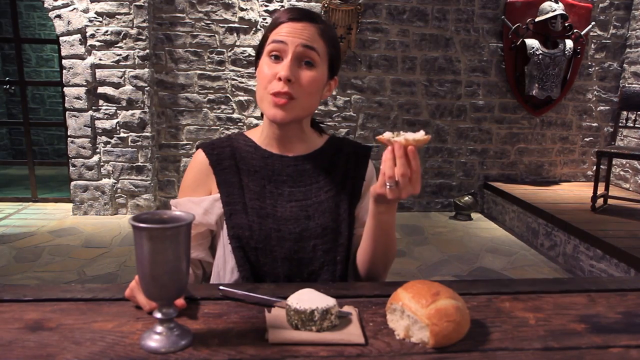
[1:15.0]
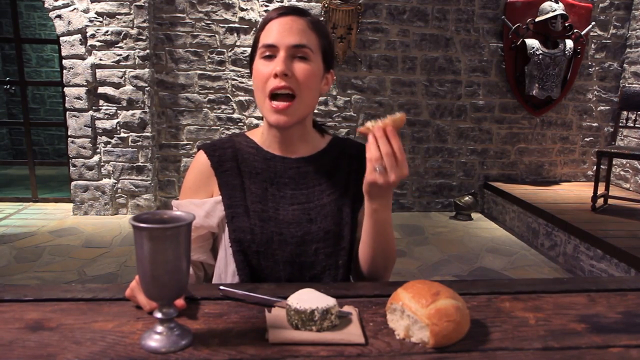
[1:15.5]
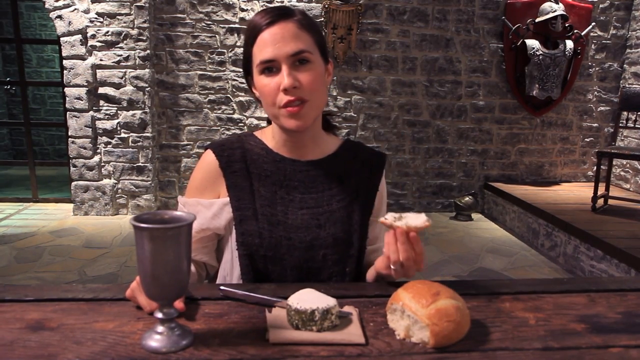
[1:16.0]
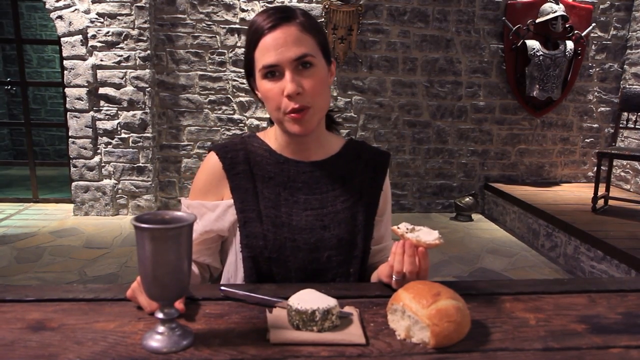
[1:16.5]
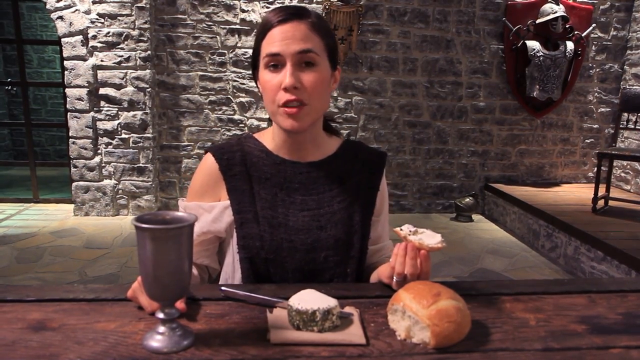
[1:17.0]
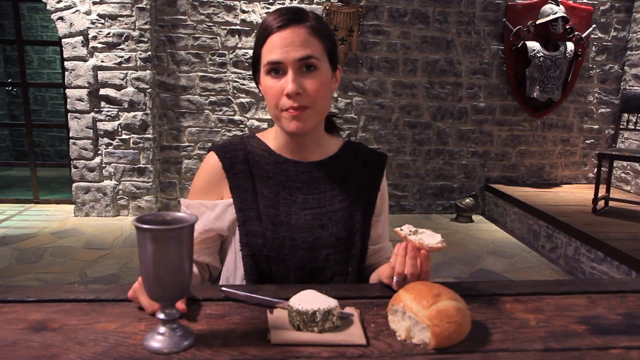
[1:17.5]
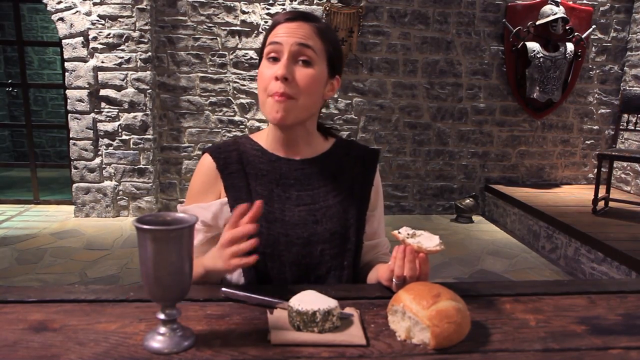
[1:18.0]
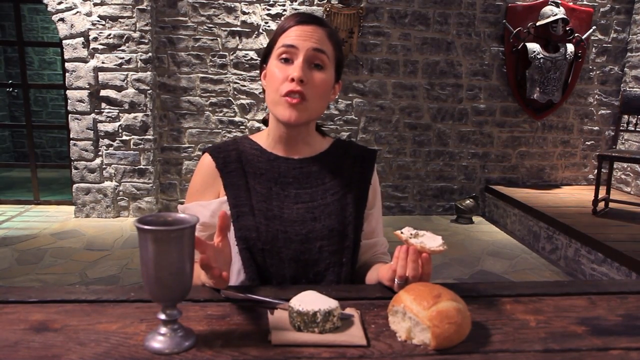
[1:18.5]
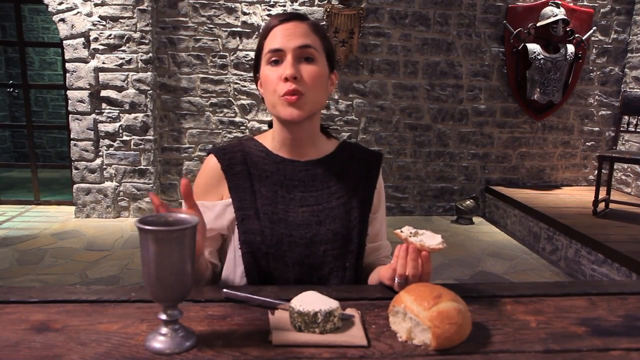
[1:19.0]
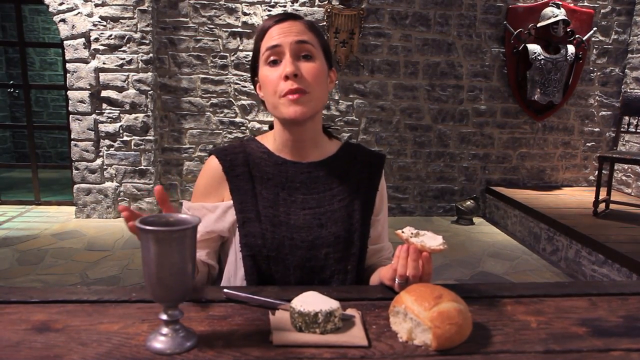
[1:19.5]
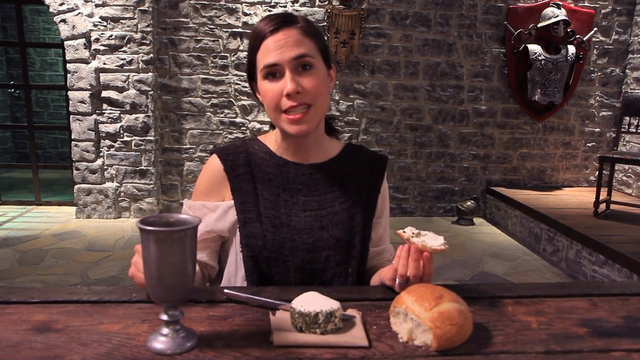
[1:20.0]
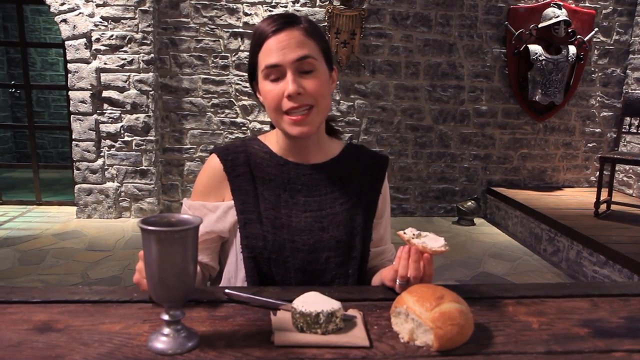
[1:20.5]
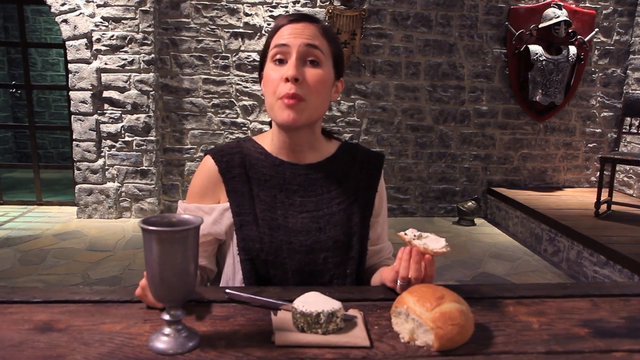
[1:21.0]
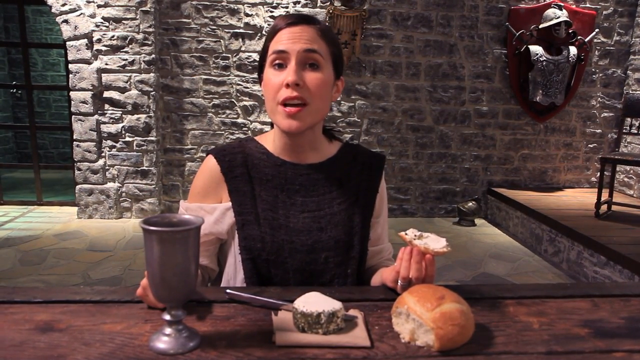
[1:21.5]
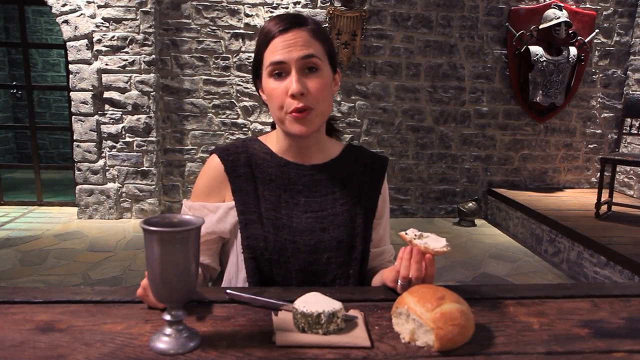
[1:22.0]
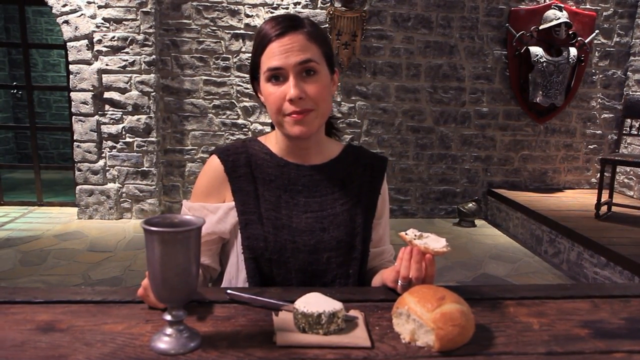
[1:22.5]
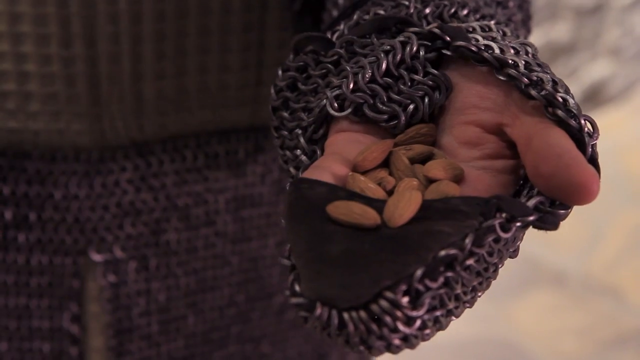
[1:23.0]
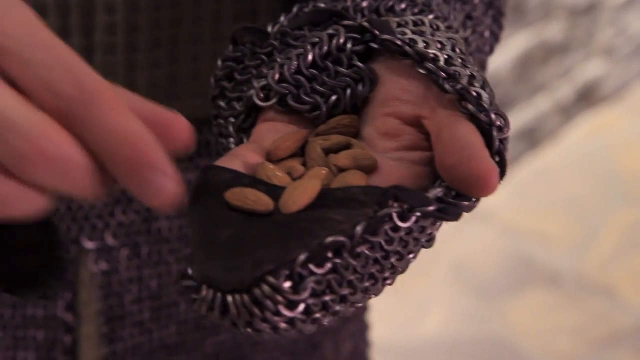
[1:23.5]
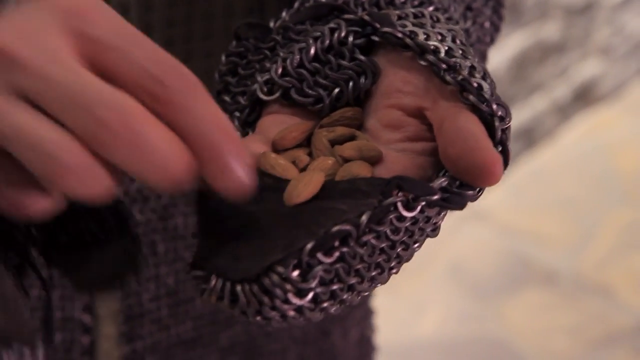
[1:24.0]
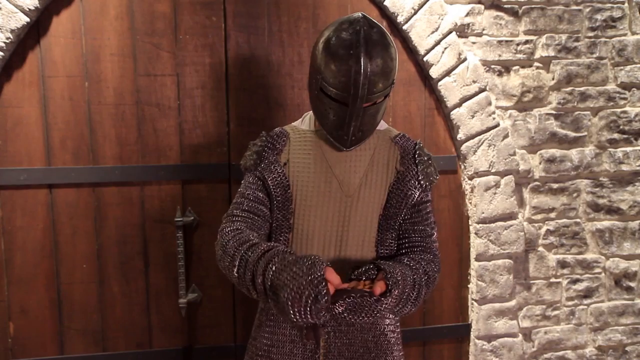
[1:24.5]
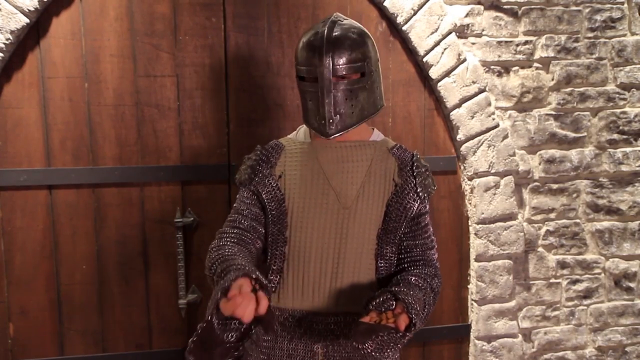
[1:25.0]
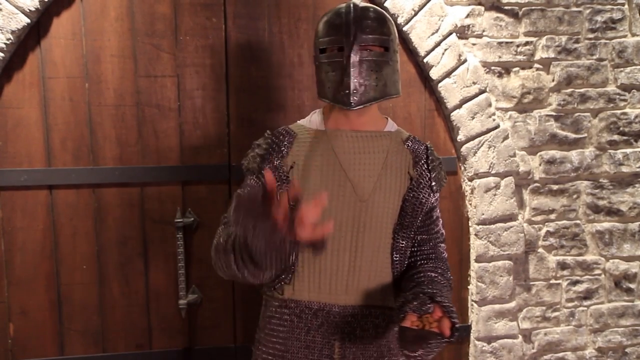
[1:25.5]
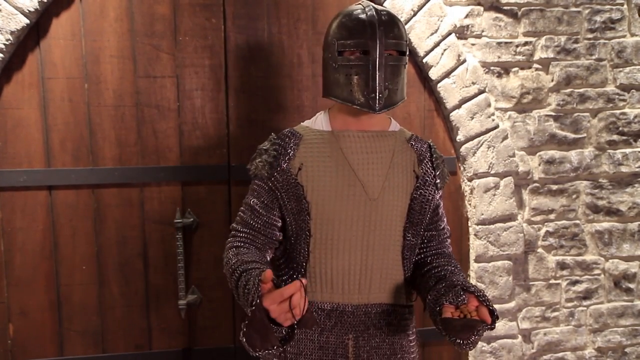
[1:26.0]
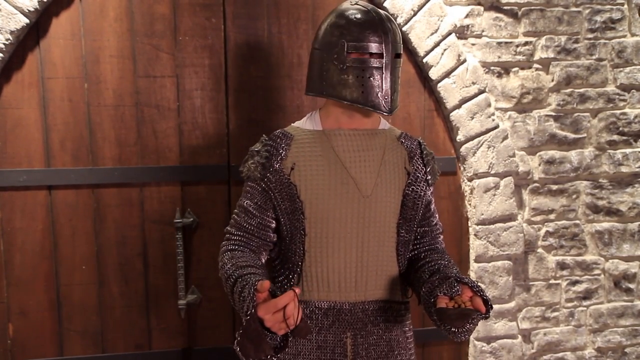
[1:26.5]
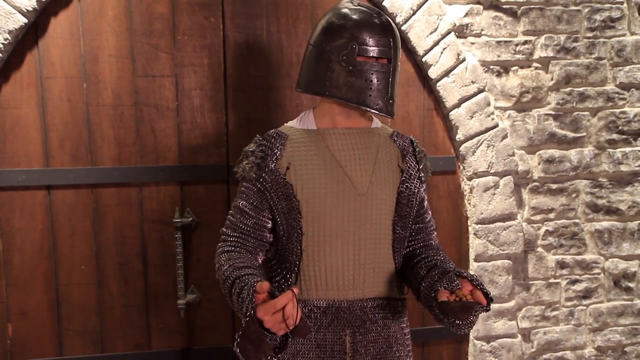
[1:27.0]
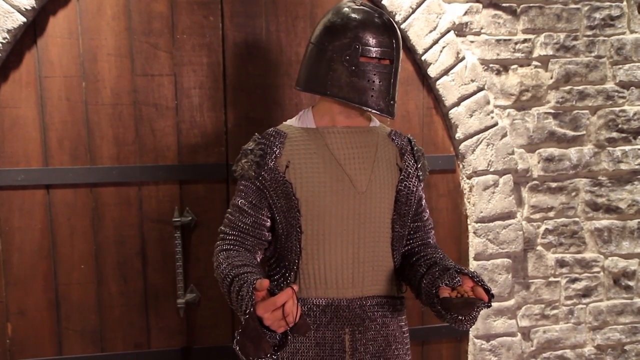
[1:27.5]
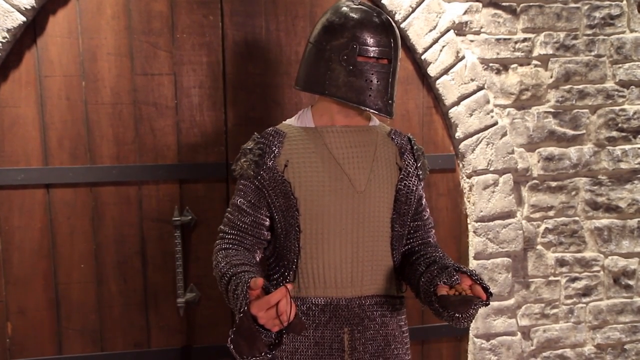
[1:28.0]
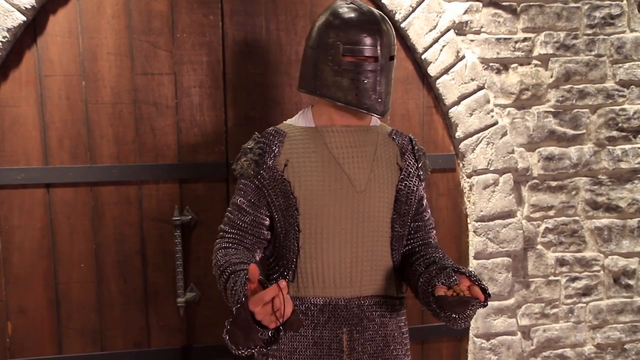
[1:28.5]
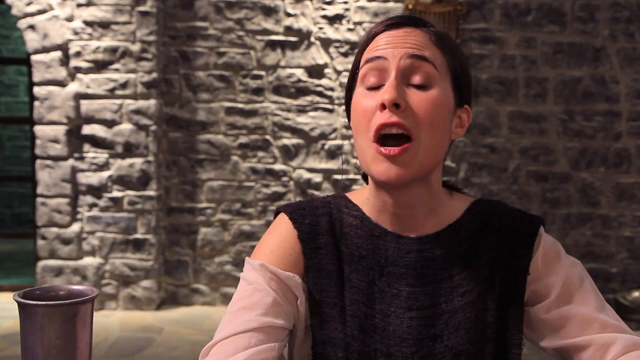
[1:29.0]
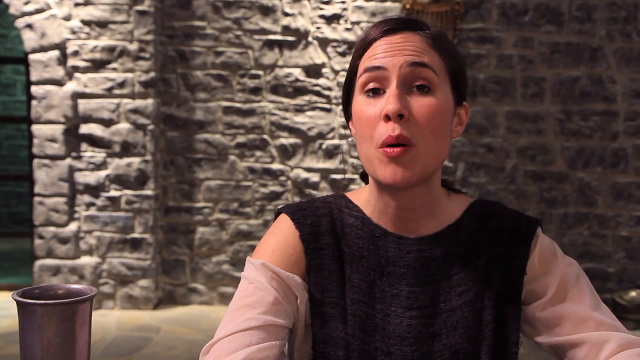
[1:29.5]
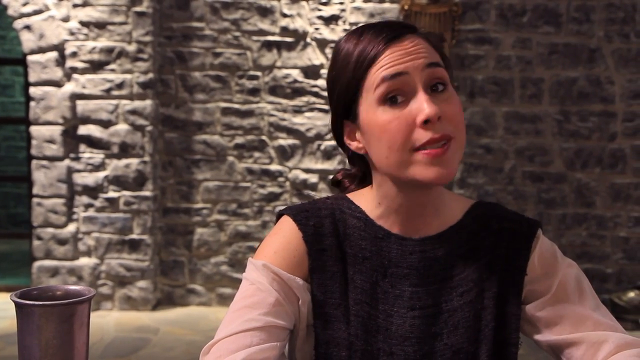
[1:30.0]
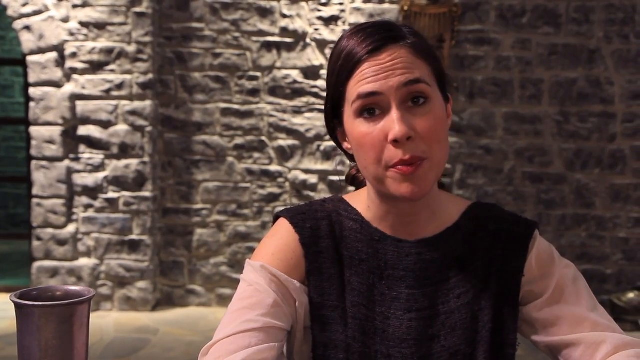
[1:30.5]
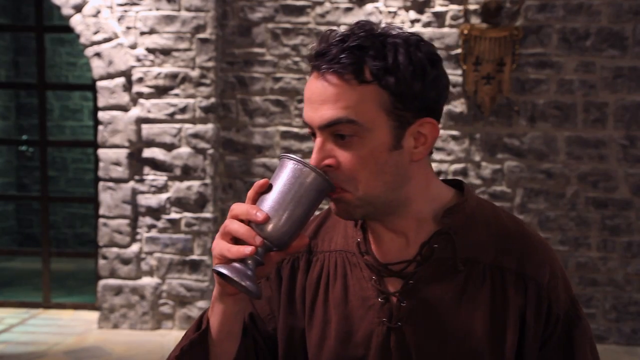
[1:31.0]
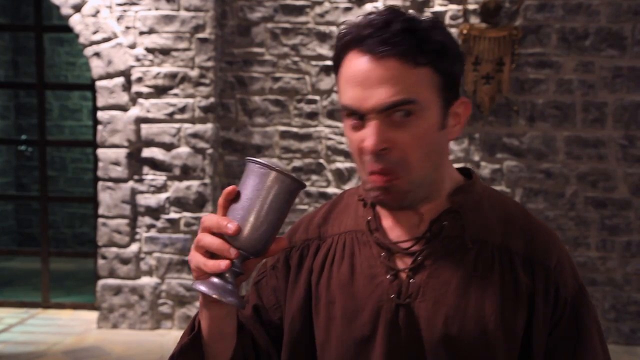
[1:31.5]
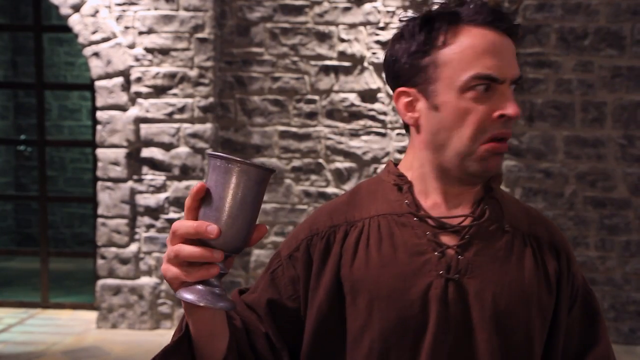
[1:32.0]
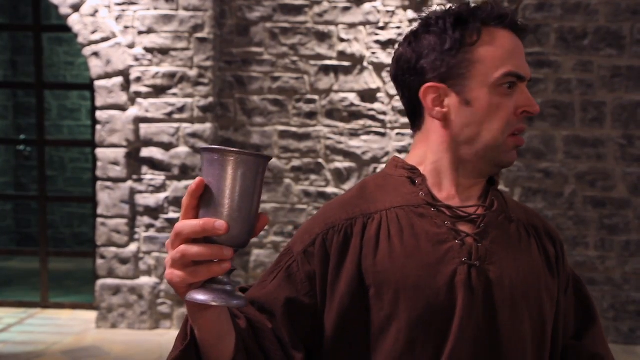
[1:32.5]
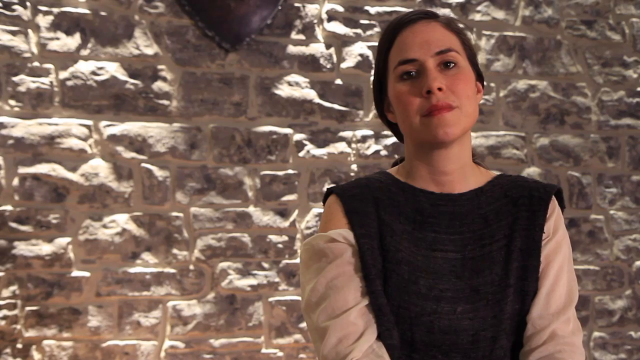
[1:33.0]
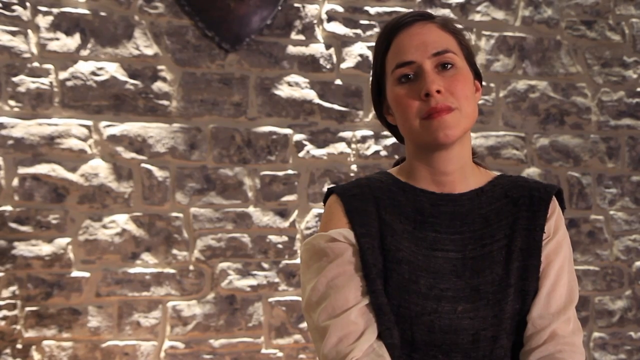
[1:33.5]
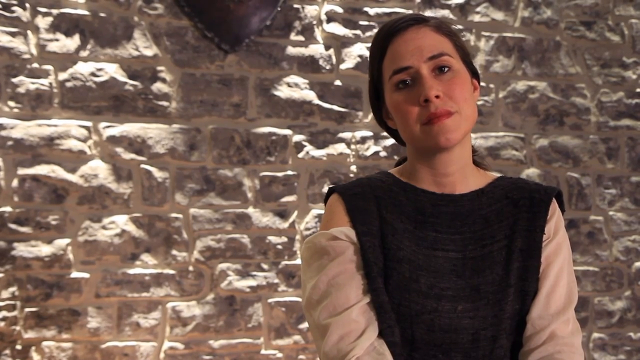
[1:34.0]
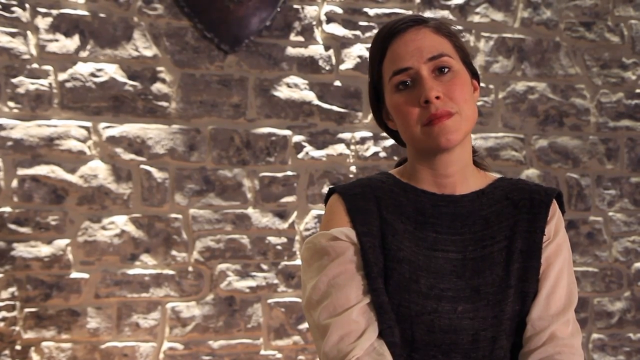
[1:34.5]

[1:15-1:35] The woman in the peasant outfit eats at a table in what looks like a castle basement, talking and gesturing with her hands. The video cuts to a man in chainmail wearing an iron helmet that covers his whole face, inside the castle. The shot starts on his hand, which holds nuts or something similar, then shows him in full. Standing in front of a wooden castle door, he throws a nut up as if to catch it in his mouth, but it hits his metal helmet and falls to the floor, and he looks toward where it fell. Next, the woman in the peasant outfit talks at the camera. Then another man in a peasant outfit not seen before drinks from a goblet in the castle basement, looking unhappy; he smells the goblet, acts as if it smells very bad and turns his head away from it. The woman in the peasant outfit appears again, looking displeased.